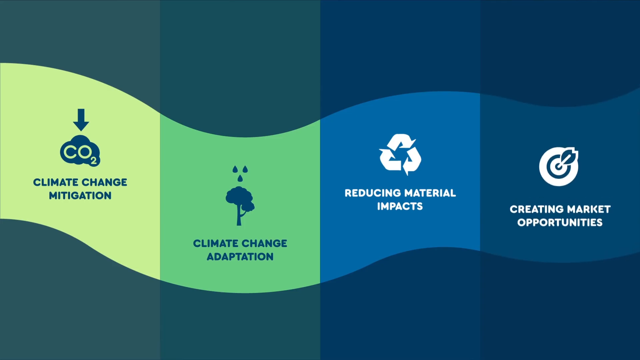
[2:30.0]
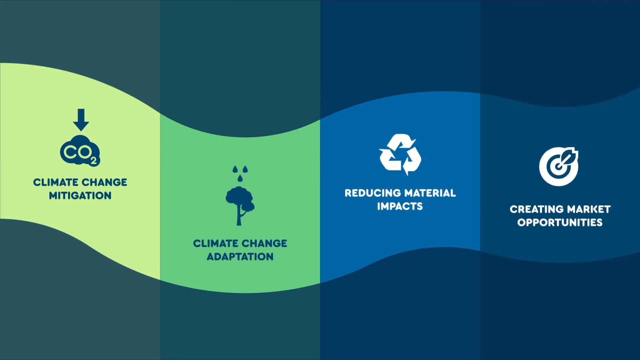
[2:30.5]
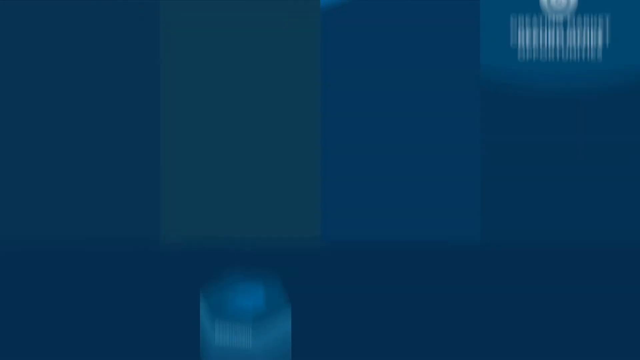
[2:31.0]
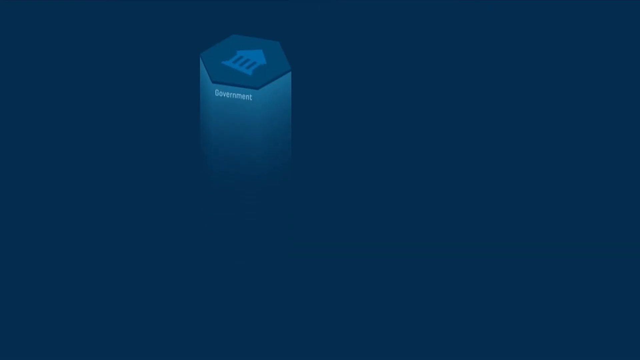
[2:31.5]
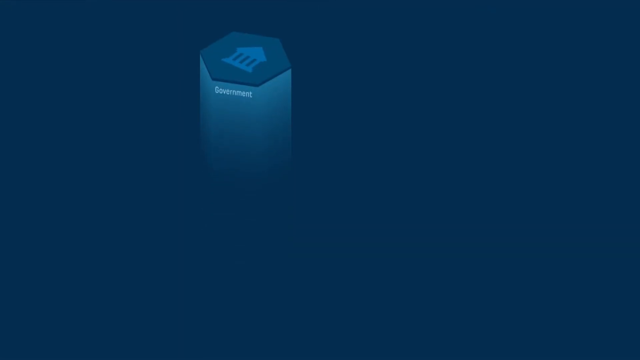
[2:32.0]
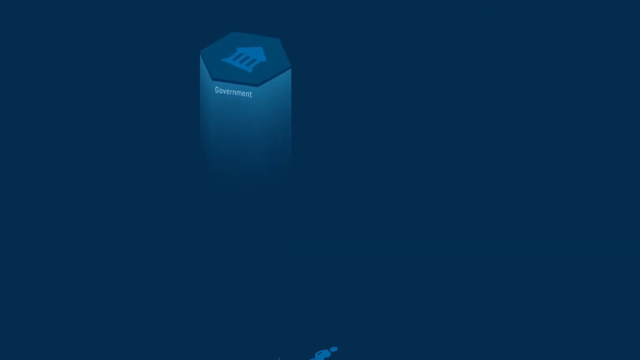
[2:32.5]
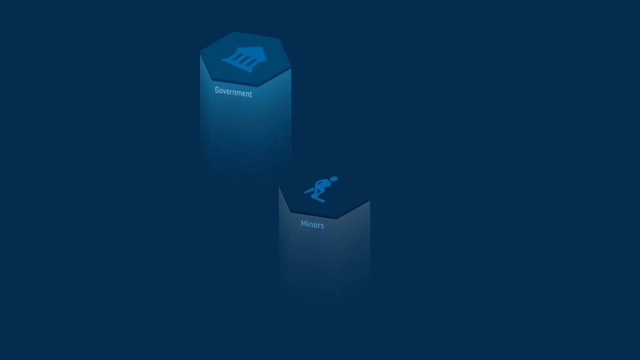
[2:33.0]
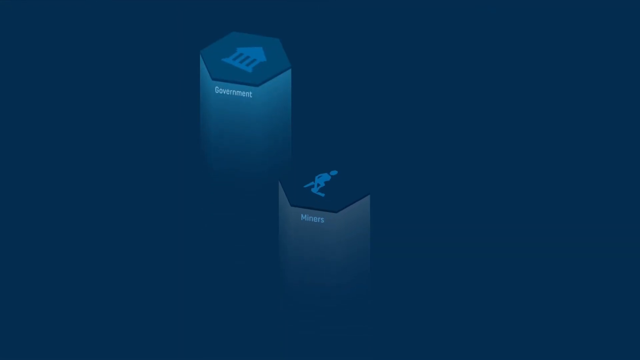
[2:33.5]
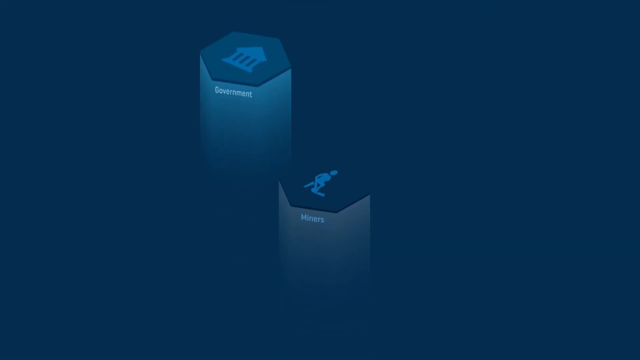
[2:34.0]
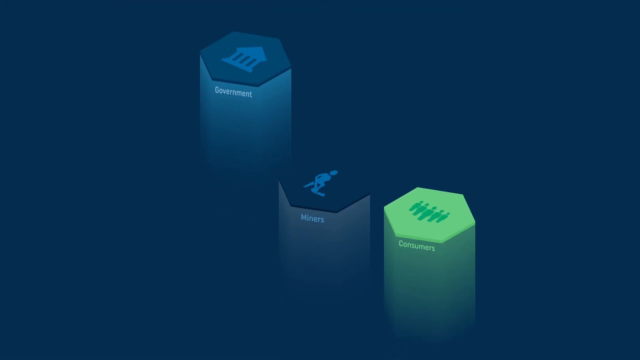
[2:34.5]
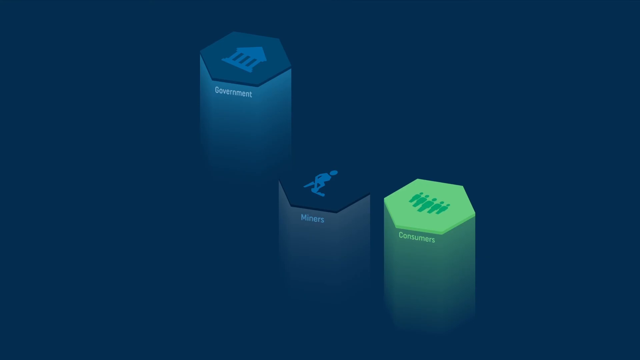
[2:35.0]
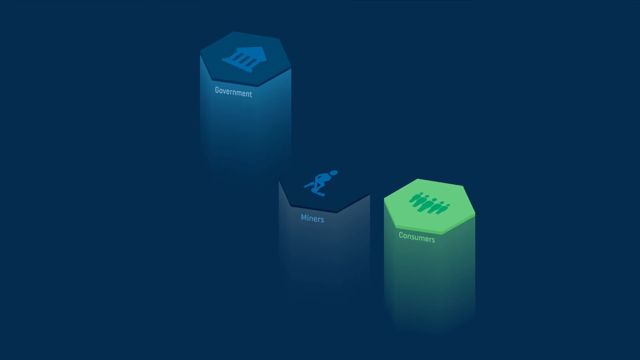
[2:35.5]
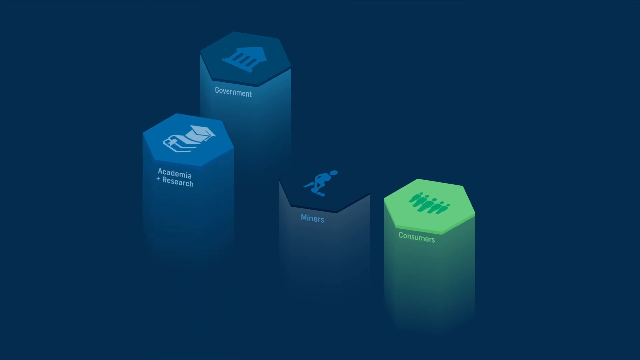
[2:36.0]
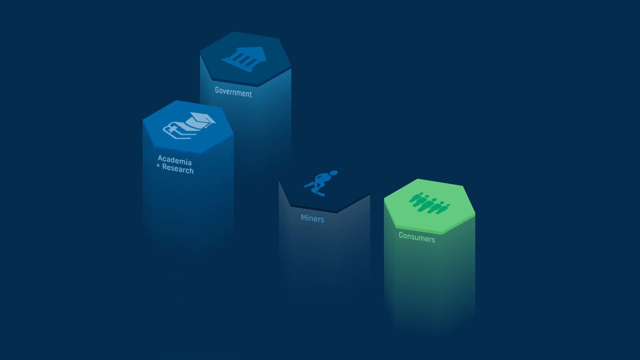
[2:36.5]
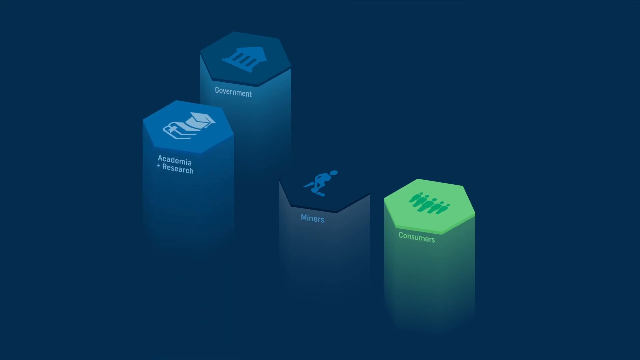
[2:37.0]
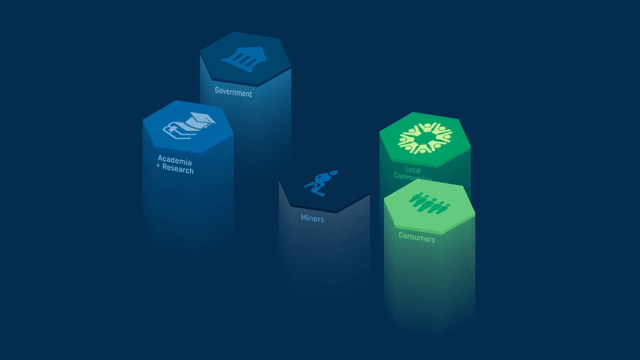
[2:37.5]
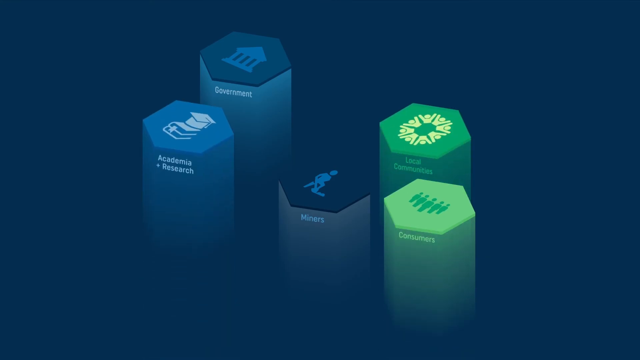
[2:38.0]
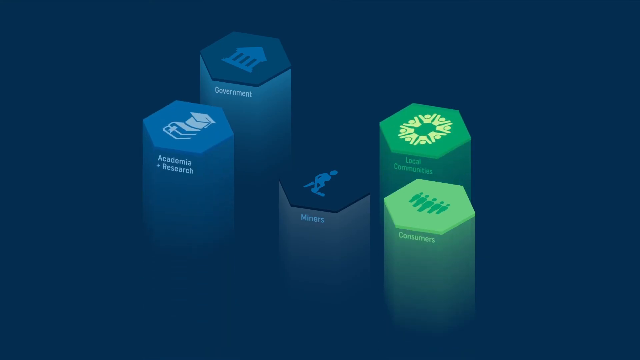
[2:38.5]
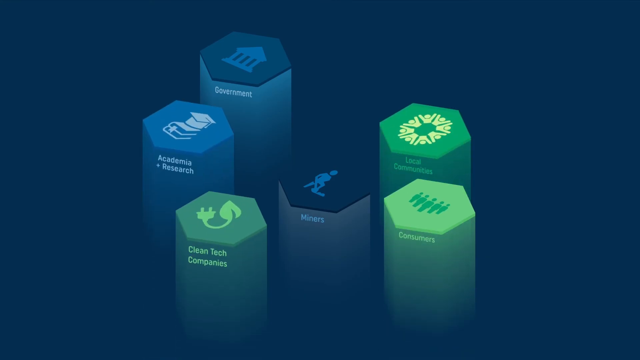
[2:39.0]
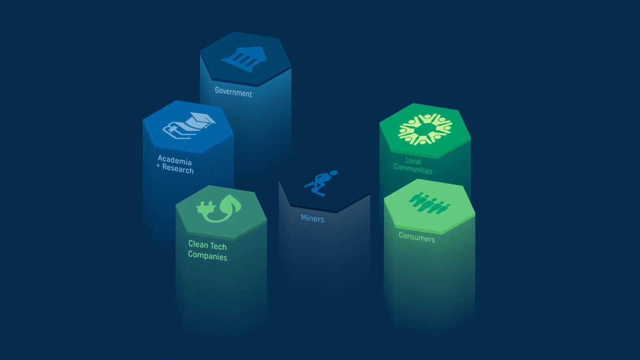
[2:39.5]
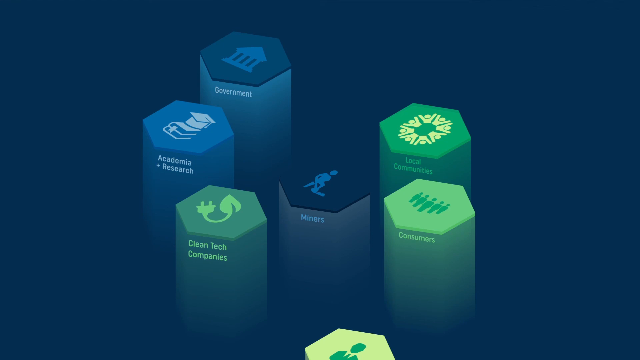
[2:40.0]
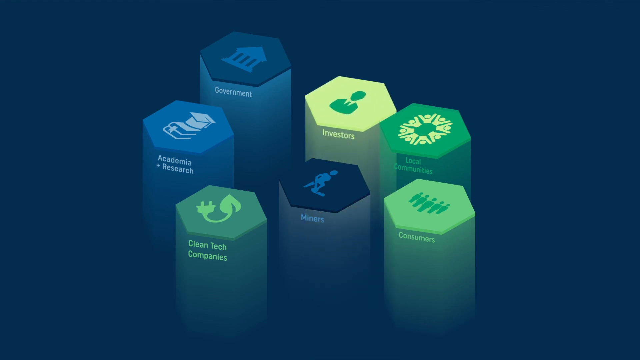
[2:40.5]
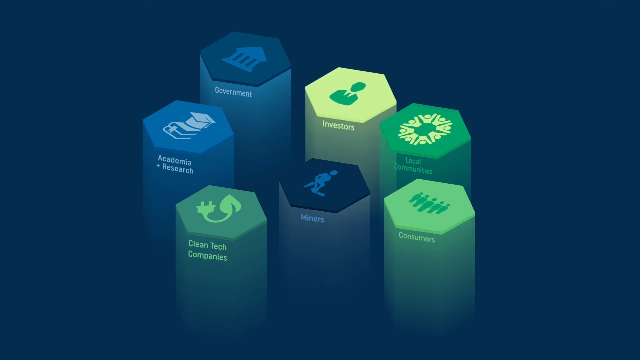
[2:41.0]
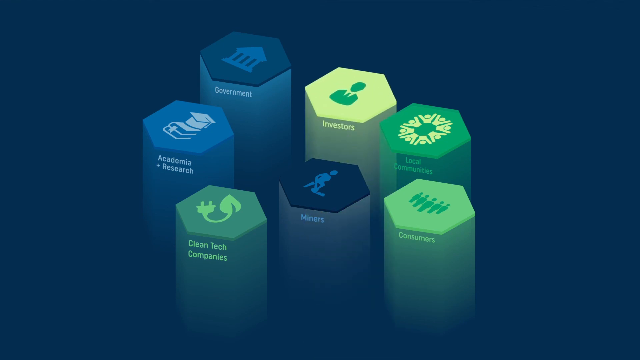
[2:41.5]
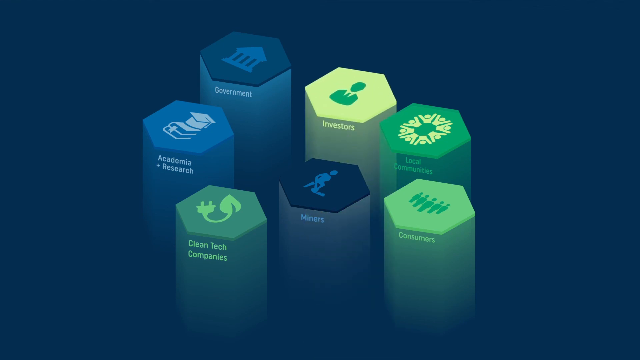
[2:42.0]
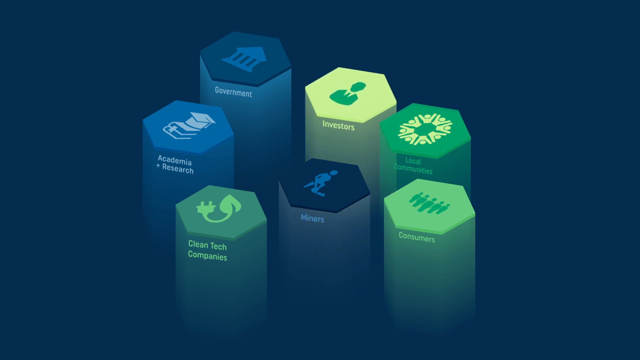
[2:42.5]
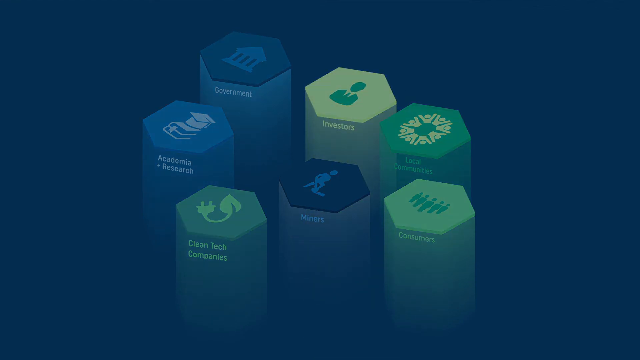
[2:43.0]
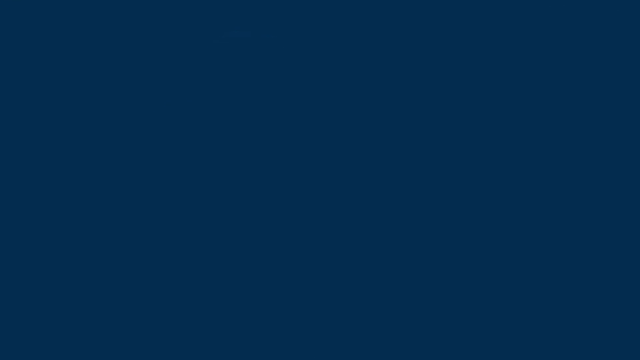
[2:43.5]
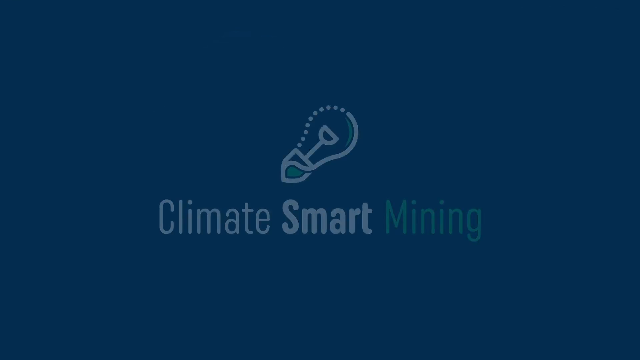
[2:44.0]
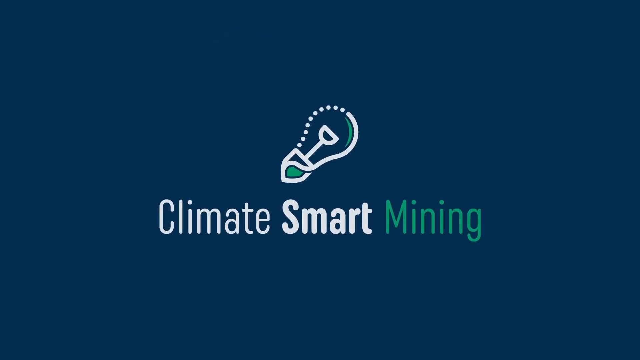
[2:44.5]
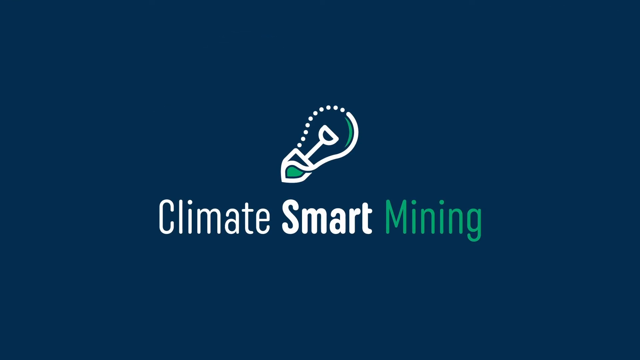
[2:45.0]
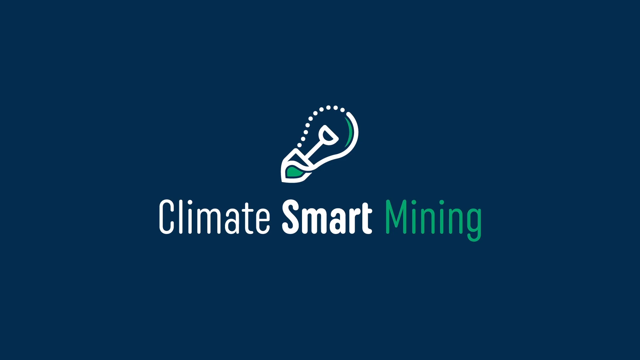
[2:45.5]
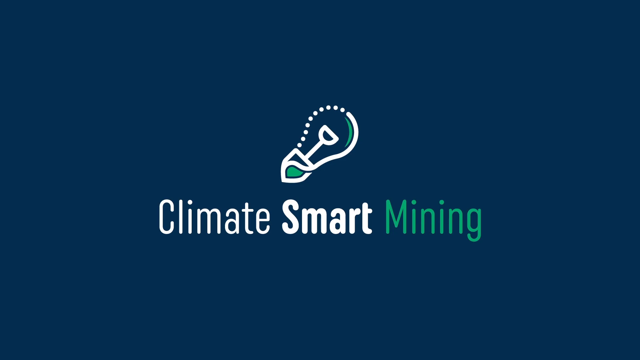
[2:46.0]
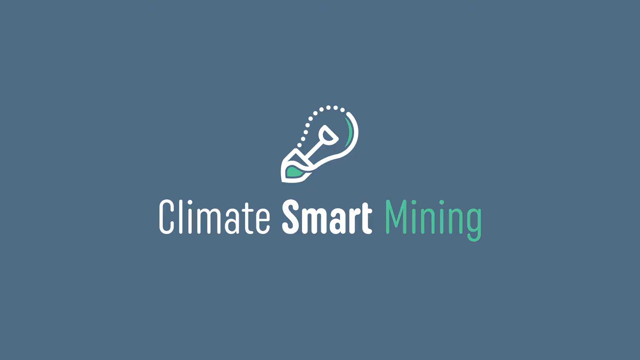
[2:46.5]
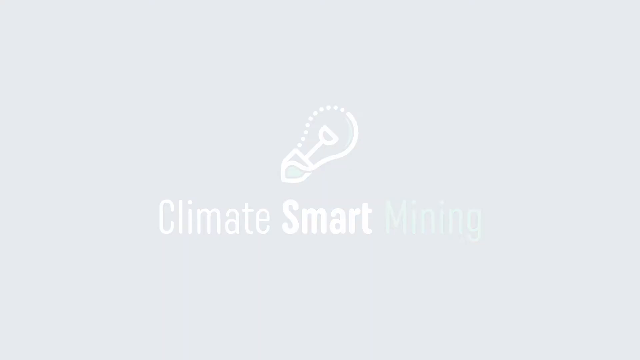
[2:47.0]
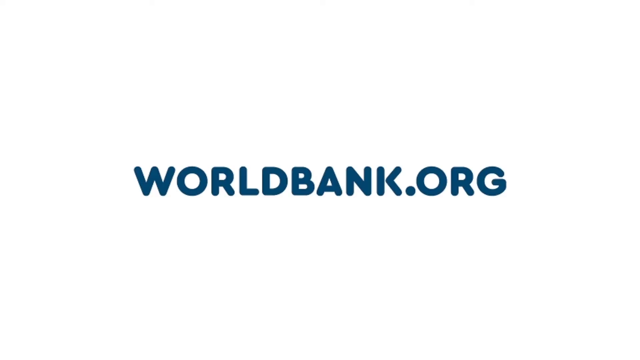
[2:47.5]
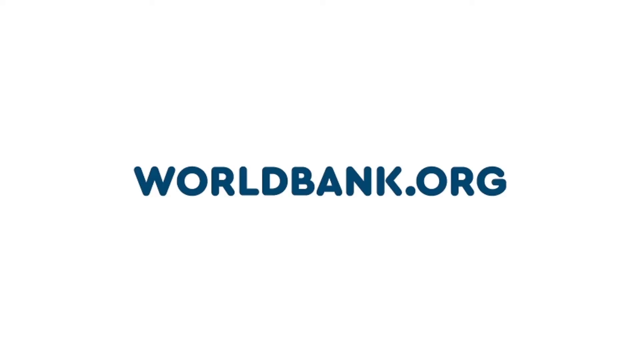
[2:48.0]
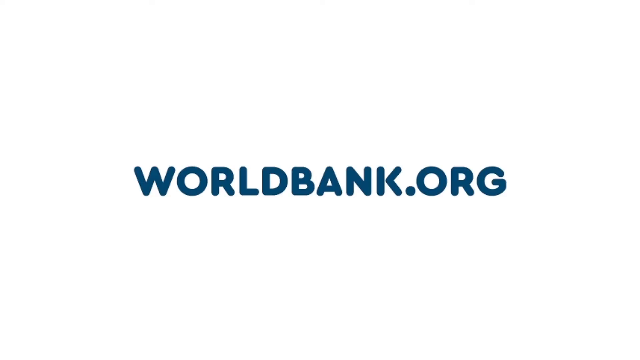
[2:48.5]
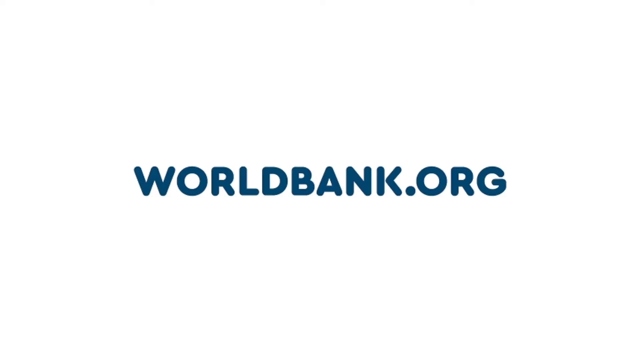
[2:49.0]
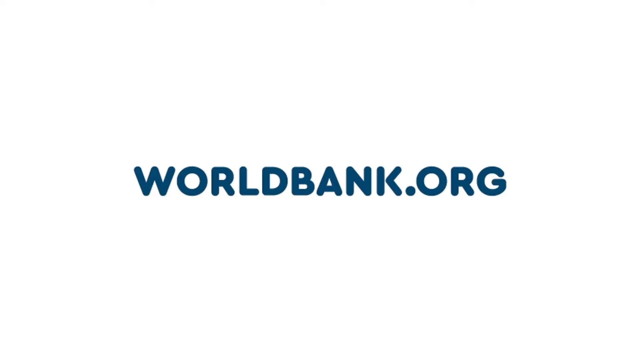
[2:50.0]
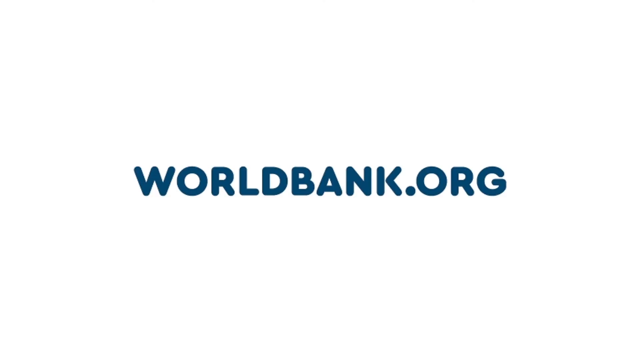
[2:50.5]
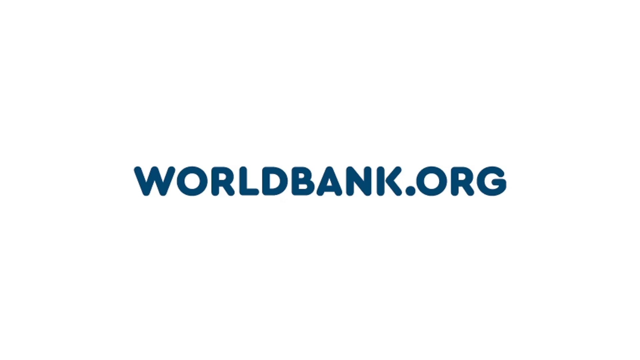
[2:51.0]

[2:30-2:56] A screen shows "climate change mitigation" in yellow, "climate change adaptation" in green, "reducing material impacts" in blue and "creating market opportunities" in a darker blue, with a symbol above each: a CO2 symbol in the yellow, what looks like a tree with rain coming down in the green, a recycling symbol in the lighter blue, and something like a dart in a target board in the darker blue. Then pillars pop up labeled "government," "academia or research," "minors" and "consumers," followed by more reading "local communities," "clean tech companies" and "investors." The screen then changes to "Climate Smart Mining" and then "WorldBank.org."